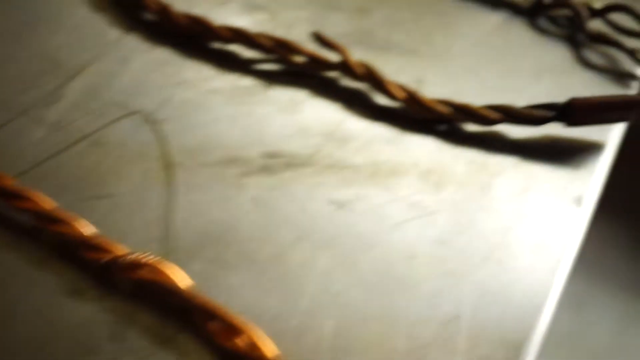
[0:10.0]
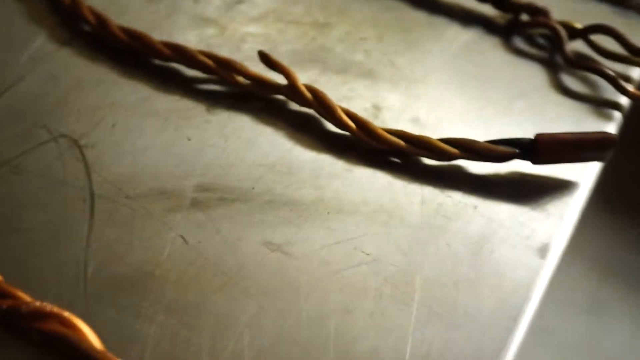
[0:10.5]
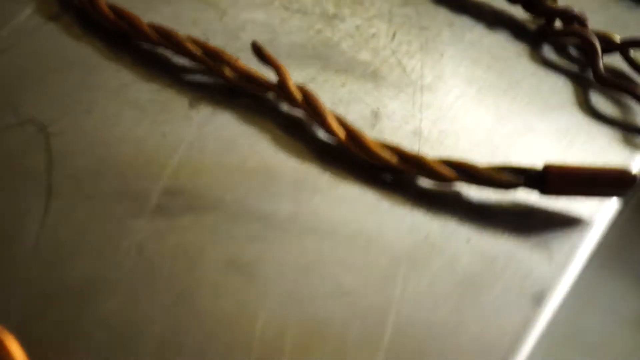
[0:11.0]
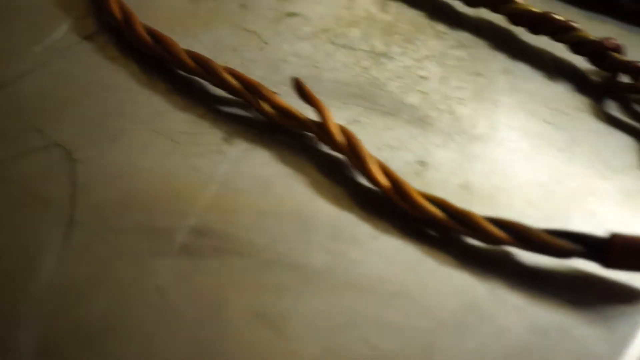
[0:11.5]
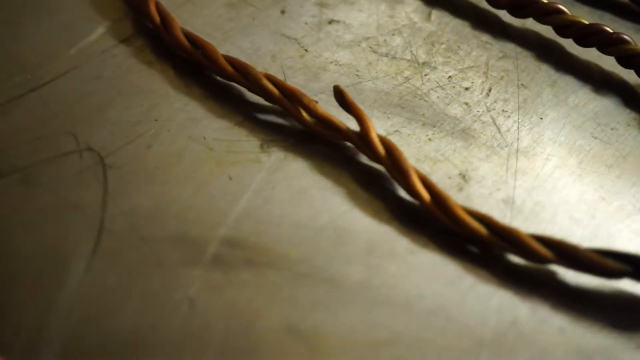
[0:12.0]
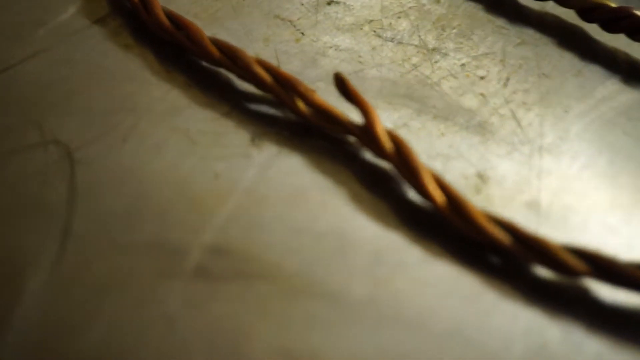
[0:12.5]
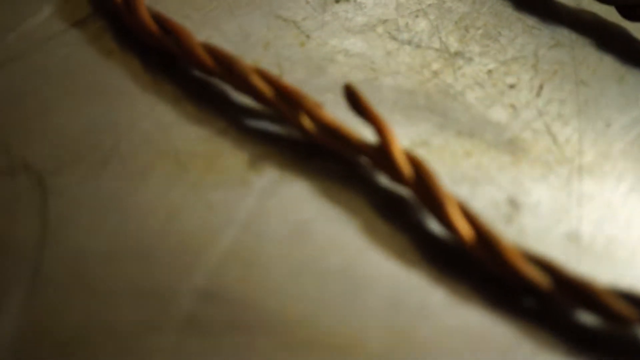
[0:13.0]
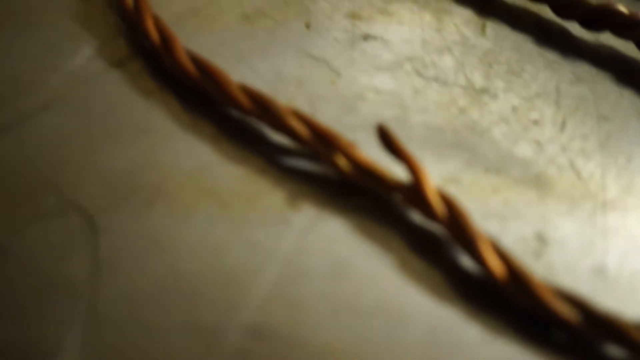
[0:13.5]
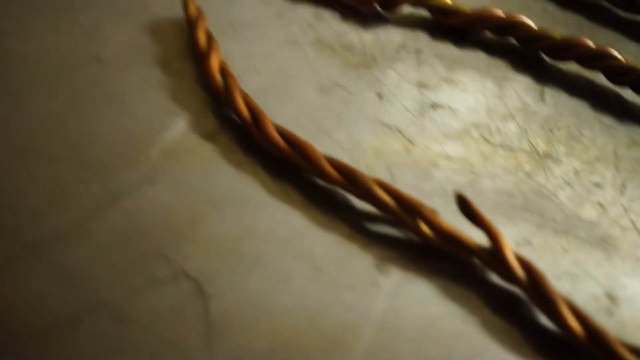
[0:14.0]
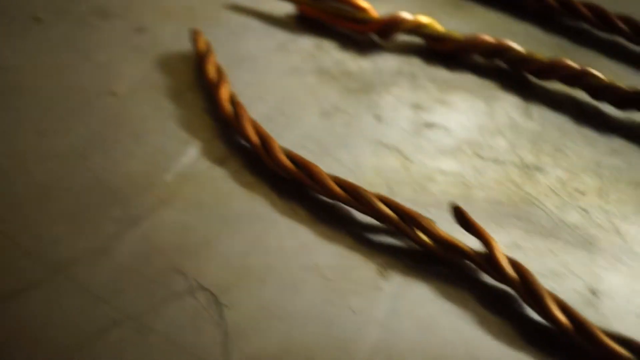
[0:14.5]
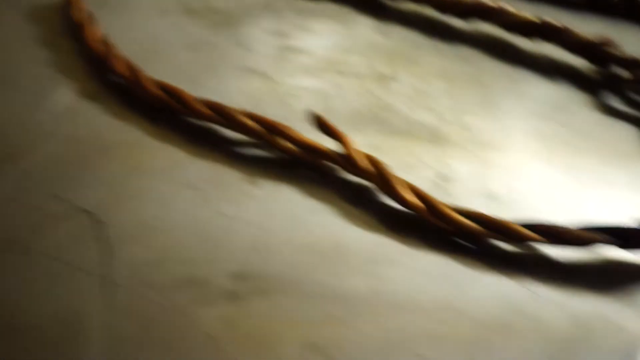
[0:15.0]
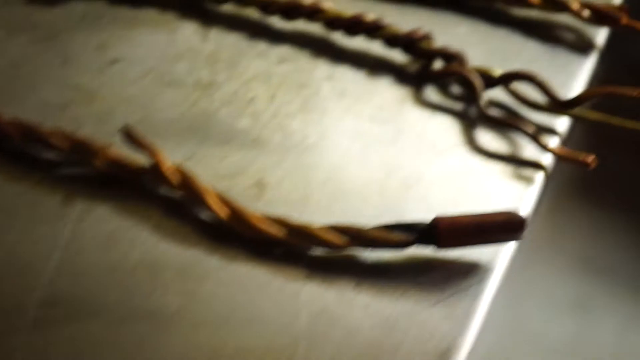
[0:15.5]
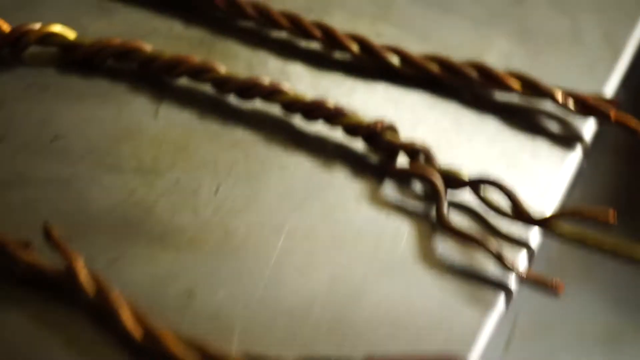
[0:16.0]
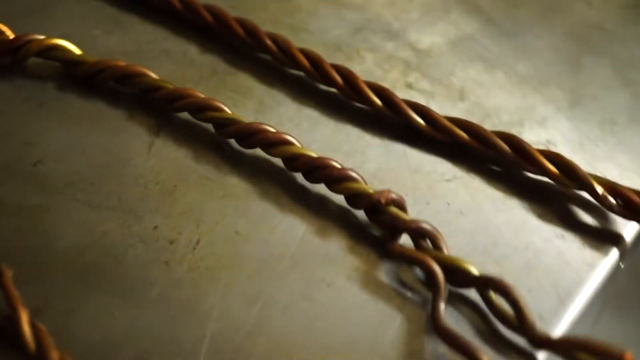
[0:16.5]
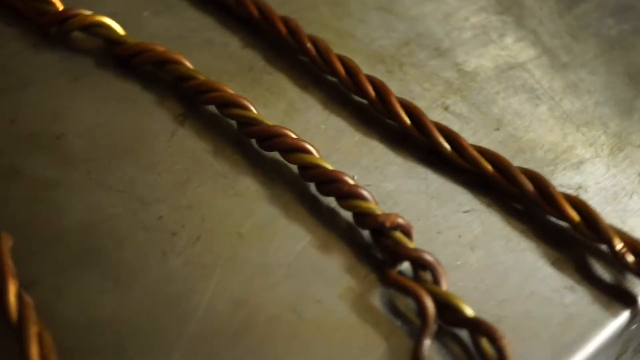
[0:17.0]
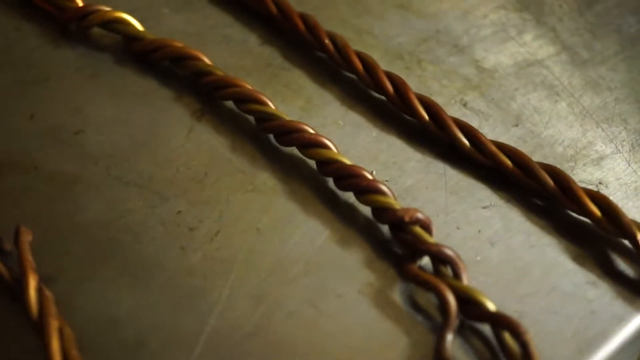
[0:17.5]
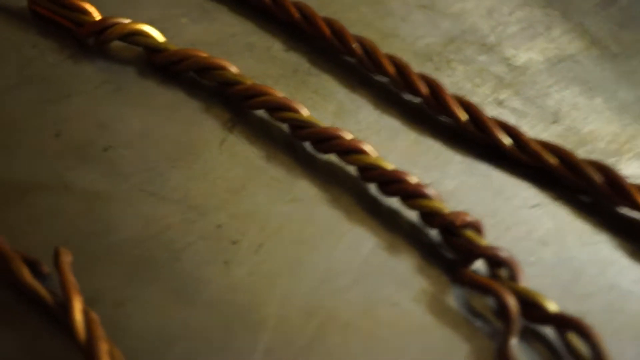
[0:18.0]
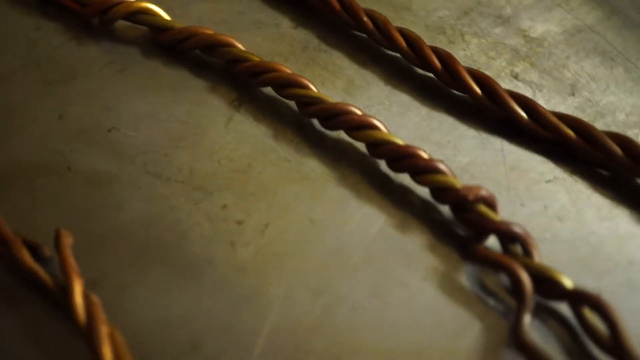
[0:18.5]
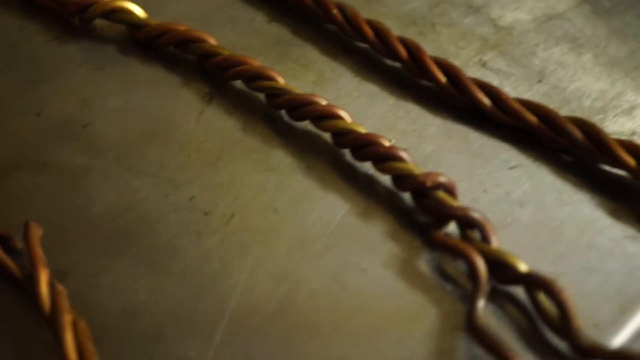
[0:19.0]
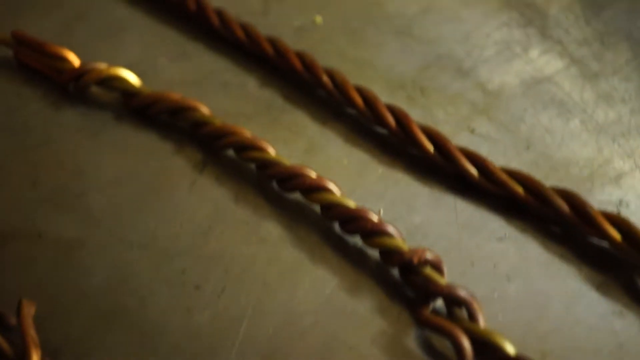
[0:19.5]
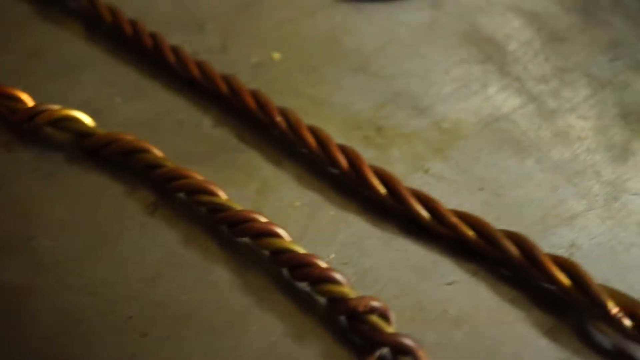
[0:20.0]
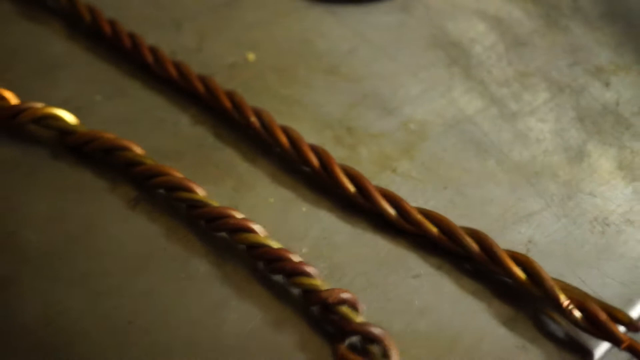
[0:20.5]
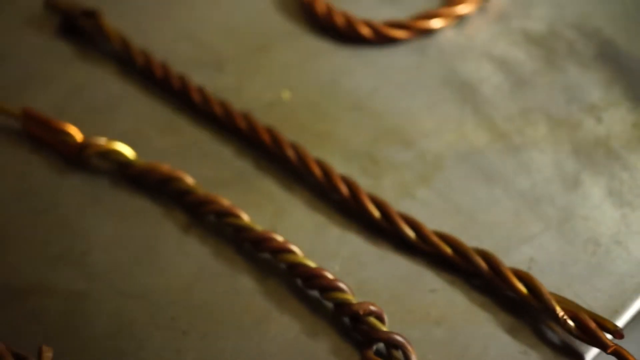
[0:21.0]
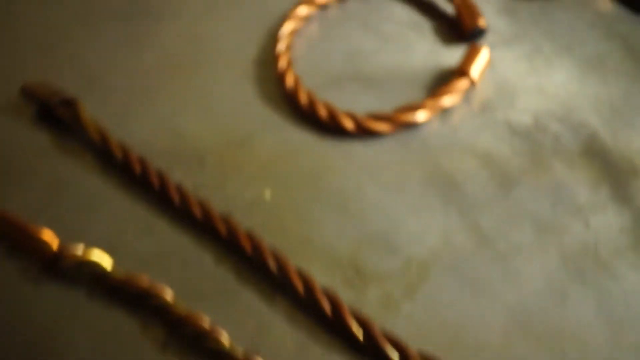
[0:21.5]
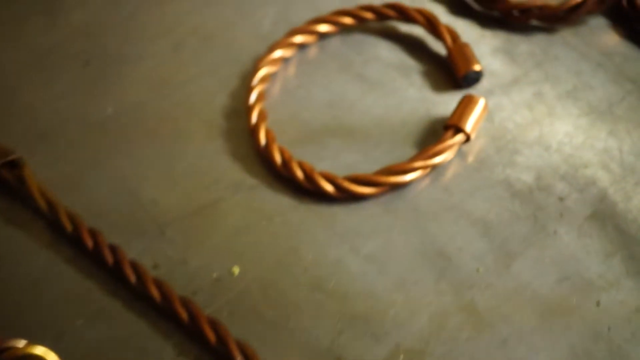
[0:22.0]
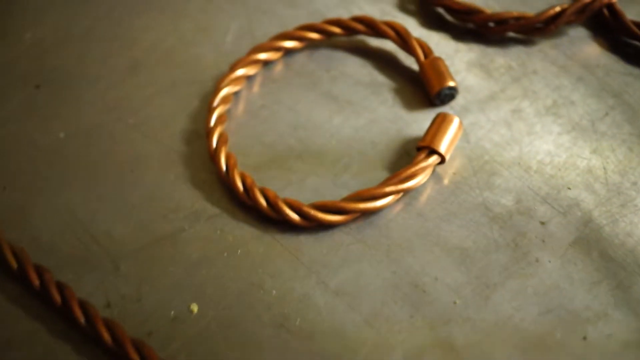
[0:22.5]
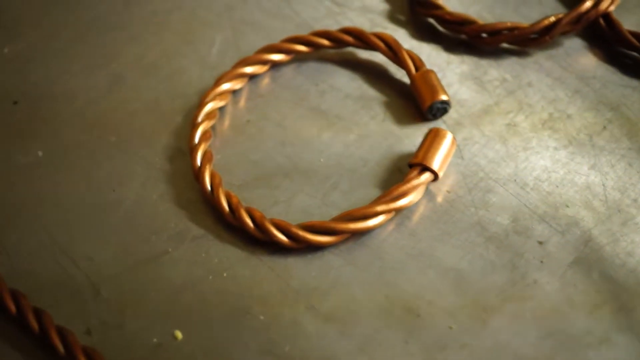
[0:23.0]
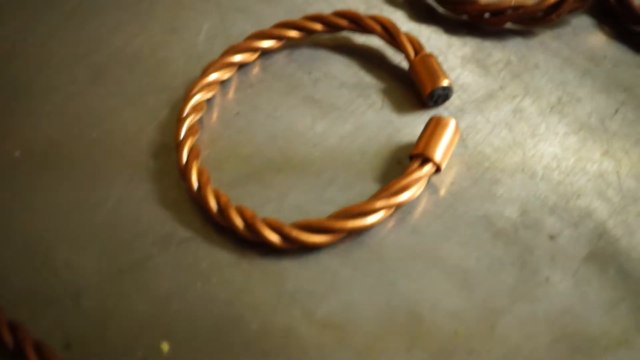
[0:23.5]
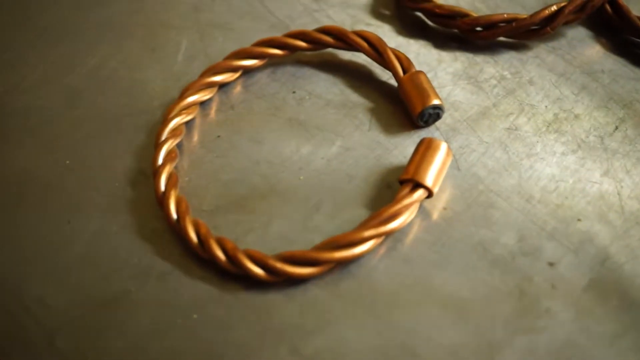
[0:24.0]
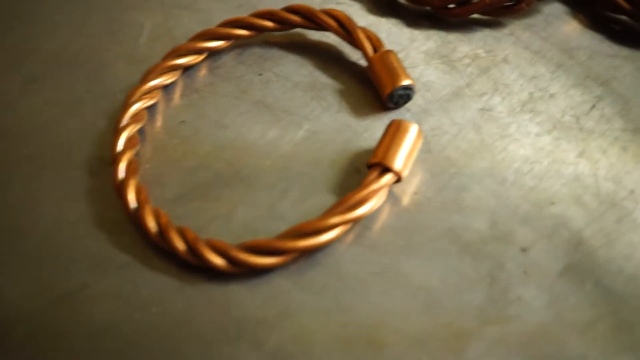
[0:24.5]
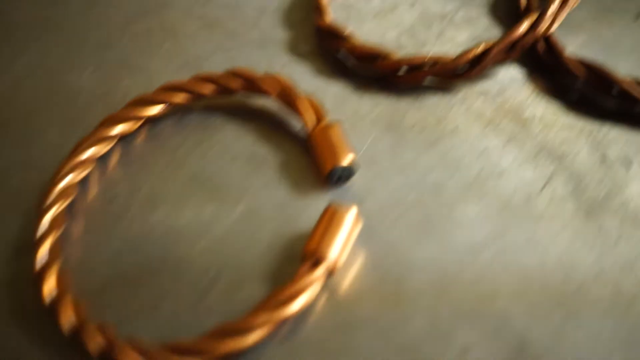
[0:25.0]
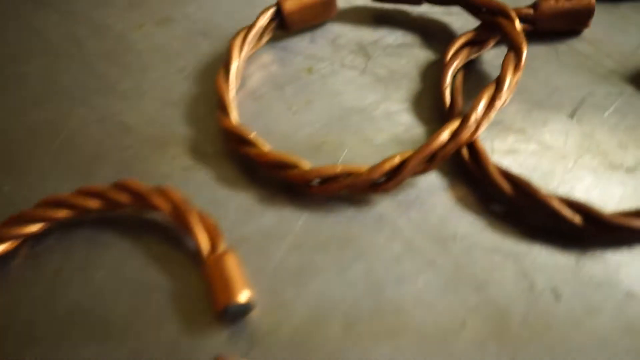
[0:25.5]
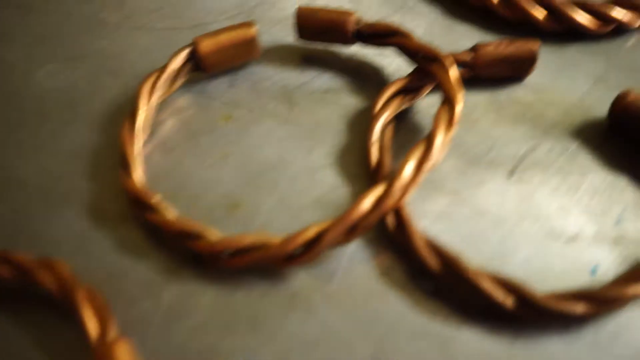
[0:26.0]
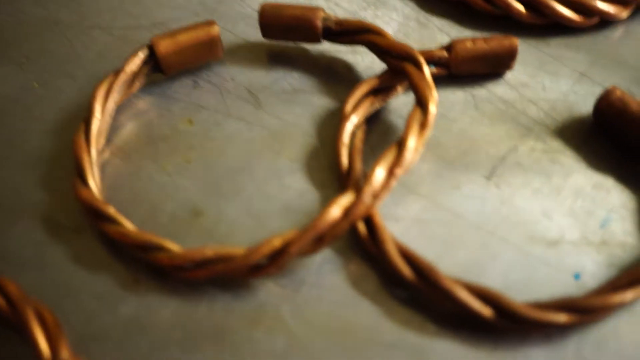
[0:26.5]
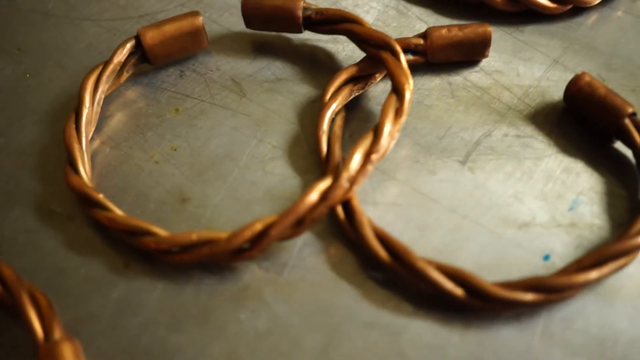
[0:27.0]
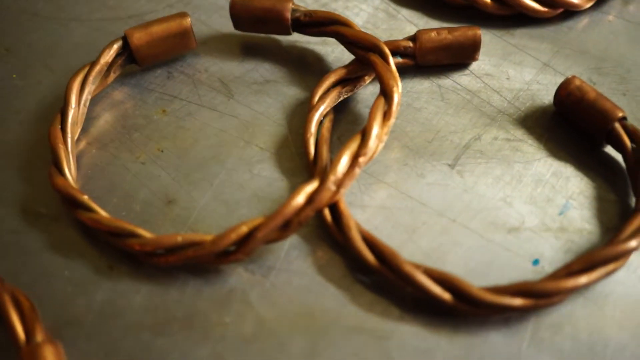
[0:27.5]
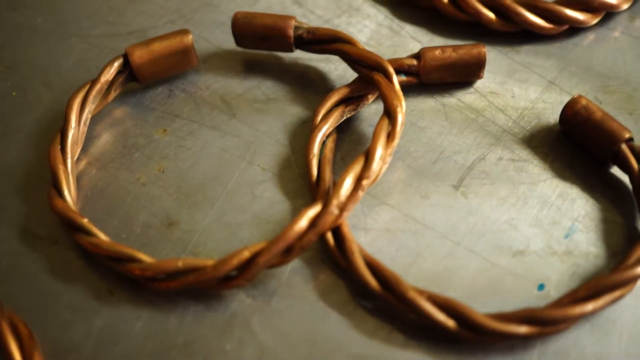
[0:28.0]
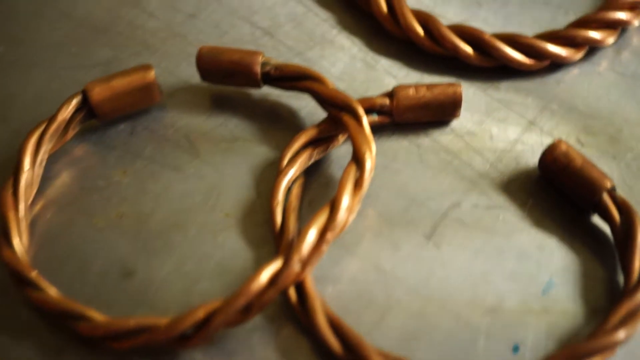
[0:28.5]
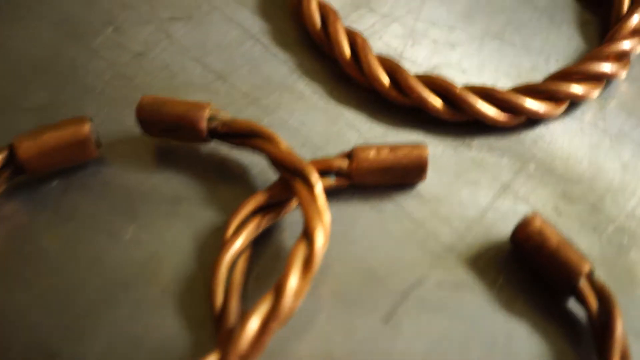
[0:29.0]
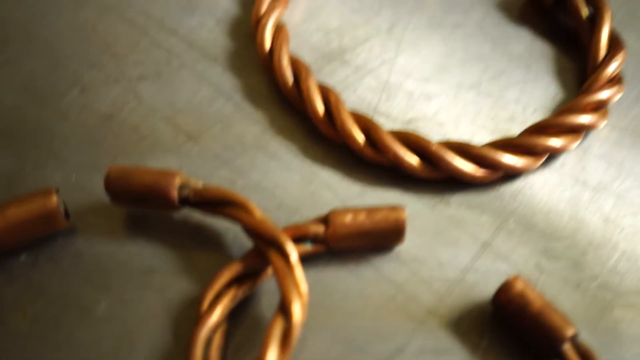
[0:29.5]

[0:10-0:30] Multiple copper braids, each made up of three wires, are on a stainless steel metal surface. The bottommost one is a brighter color, and the camera slowly pans upward to show one in the center that is a darker color and has a cap on the end. Panning further upward, the camera shows additional braids on the stainless steel table, all made of three wires and at various degrees of braiding. The one it focuses on is made of a more brass-colored wire with two copper-colored wires. Continuing upward, it shows a braid with a thicker style of braid, and finally a copper bracelet made of three wires wrapped around each other and formed into a bracelet, with the ends finished in copper-colored caps with black tips. The camera keeps panning upward, revealing that multiple of these have been made.